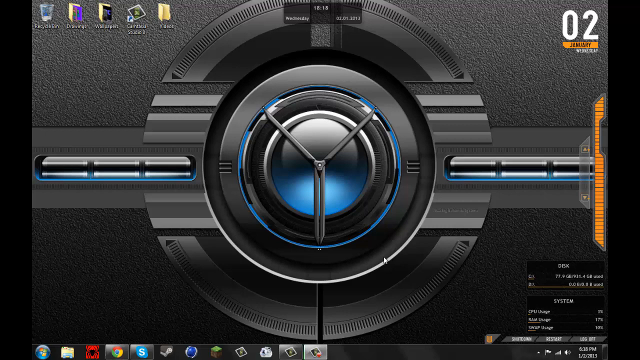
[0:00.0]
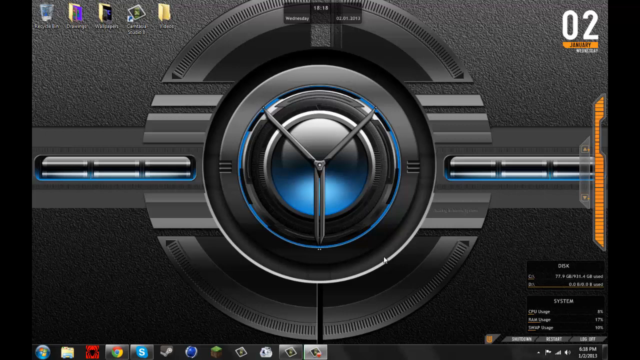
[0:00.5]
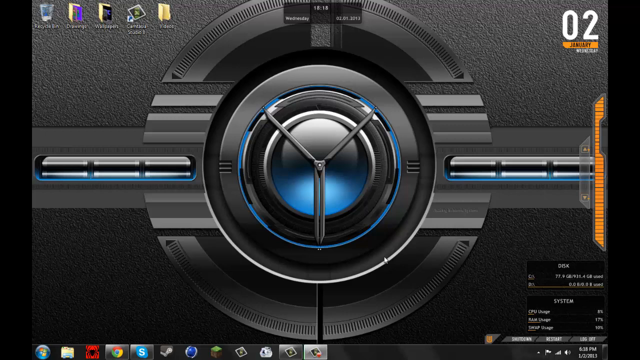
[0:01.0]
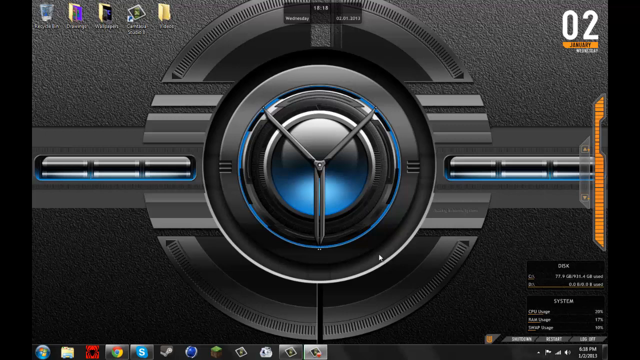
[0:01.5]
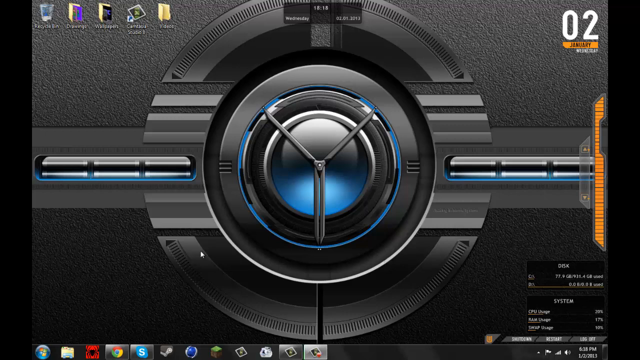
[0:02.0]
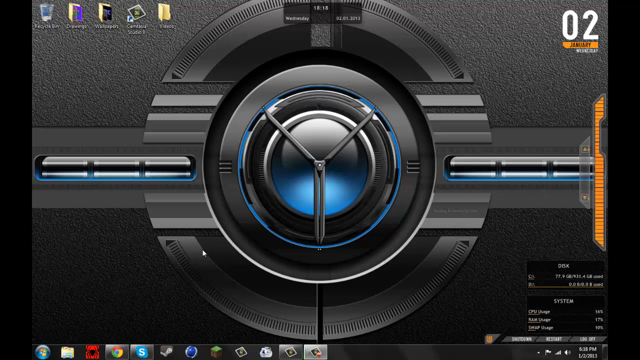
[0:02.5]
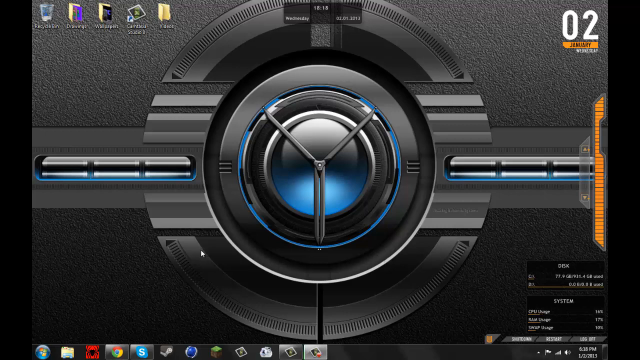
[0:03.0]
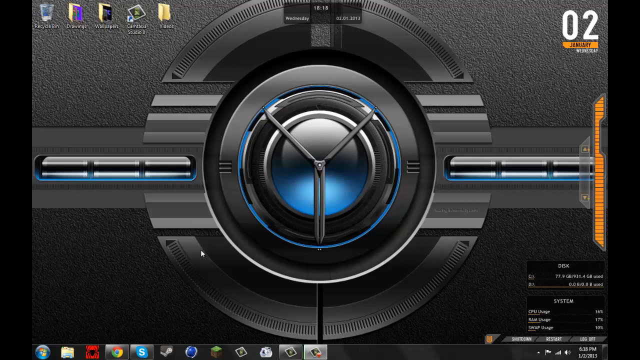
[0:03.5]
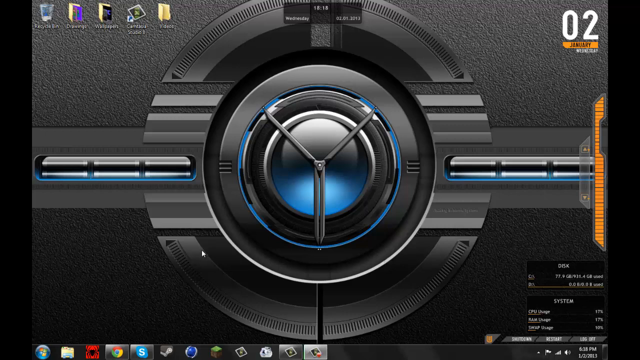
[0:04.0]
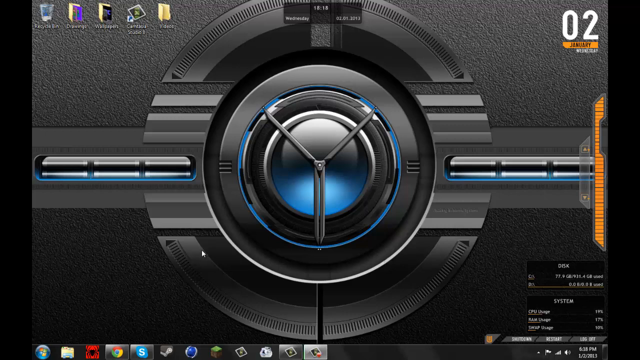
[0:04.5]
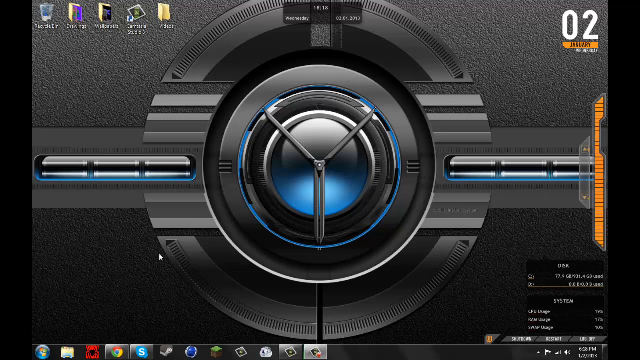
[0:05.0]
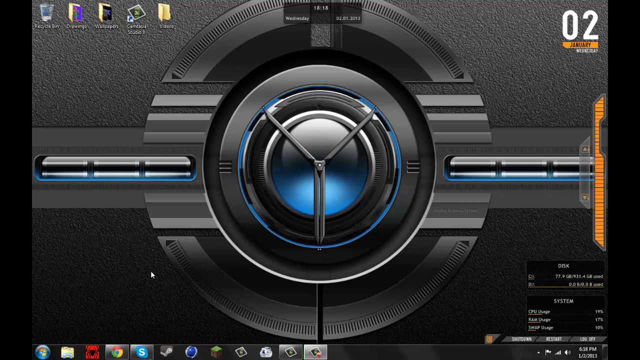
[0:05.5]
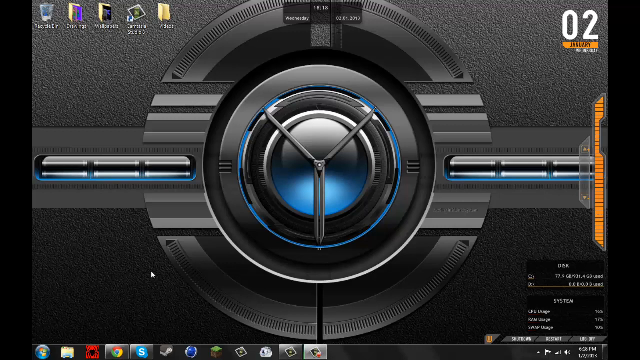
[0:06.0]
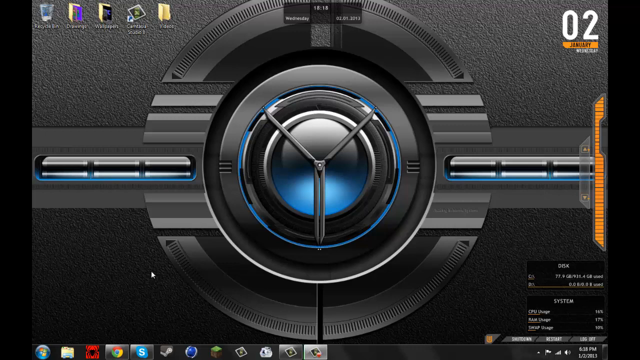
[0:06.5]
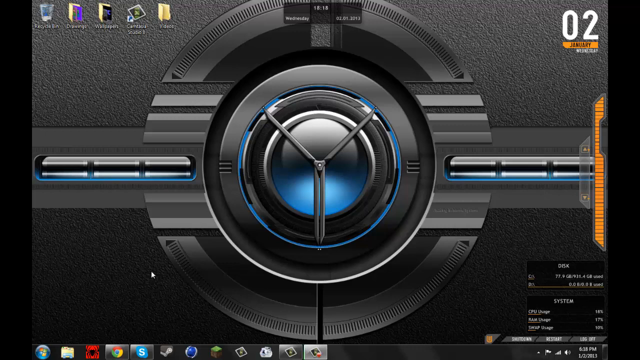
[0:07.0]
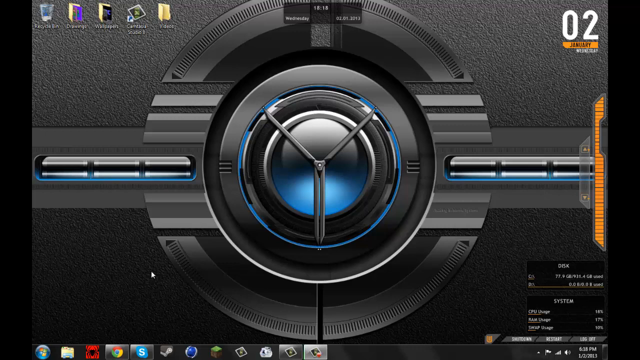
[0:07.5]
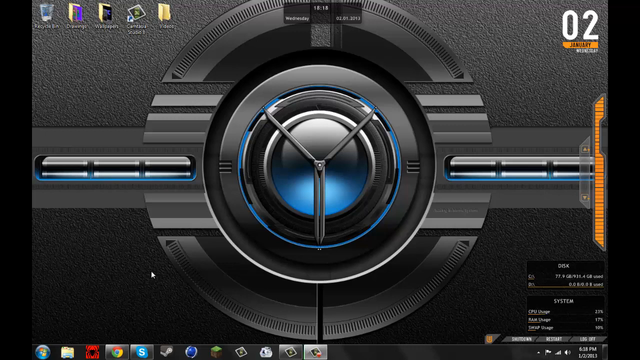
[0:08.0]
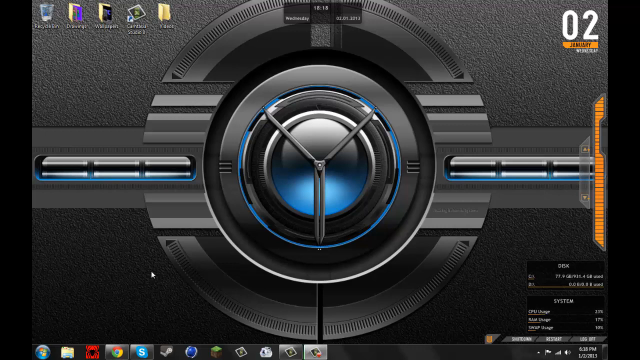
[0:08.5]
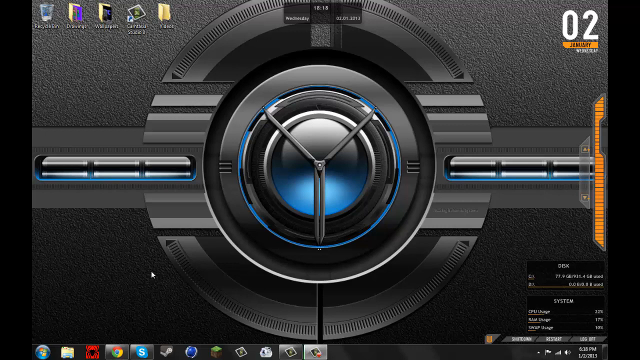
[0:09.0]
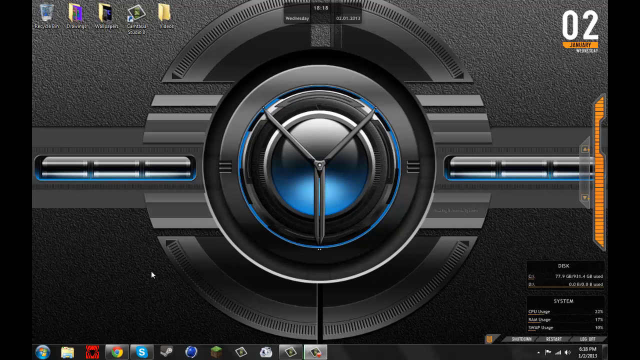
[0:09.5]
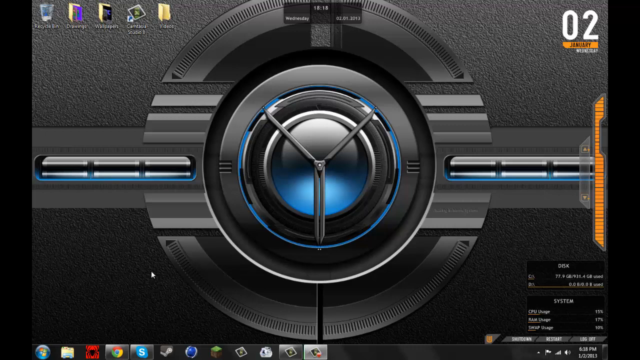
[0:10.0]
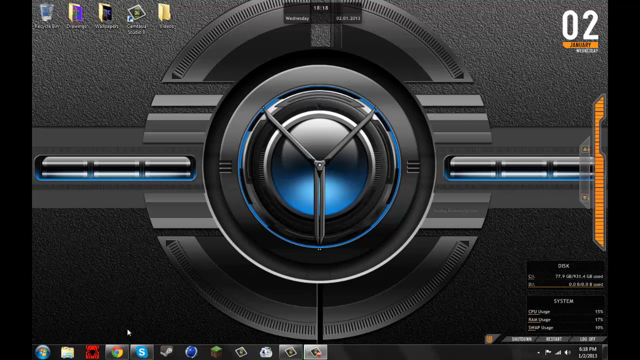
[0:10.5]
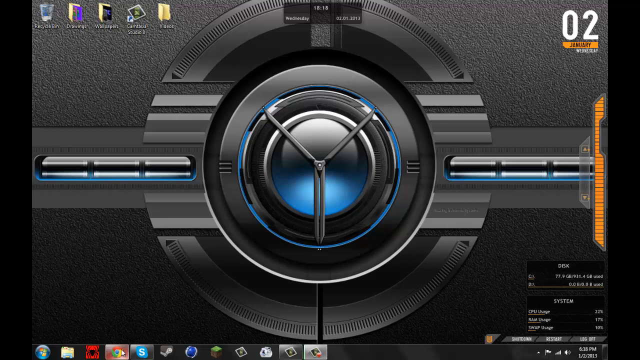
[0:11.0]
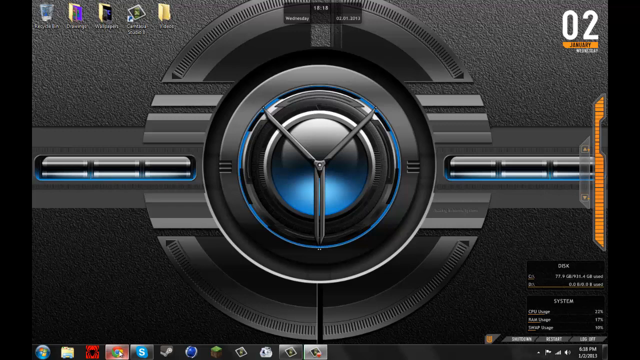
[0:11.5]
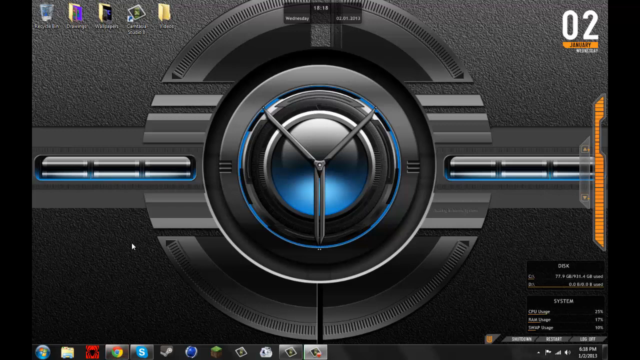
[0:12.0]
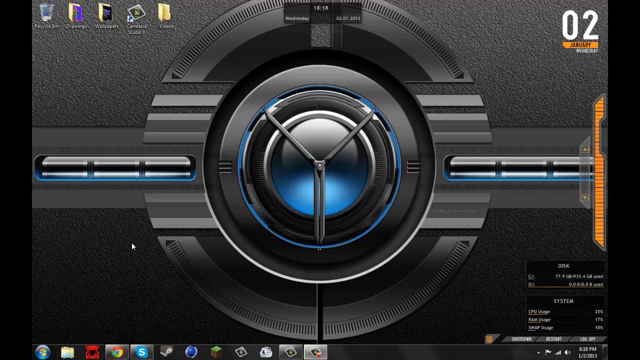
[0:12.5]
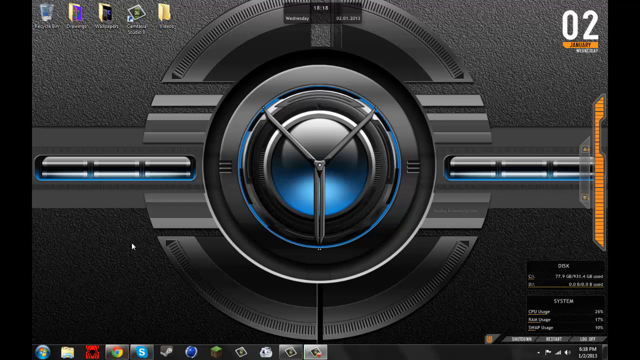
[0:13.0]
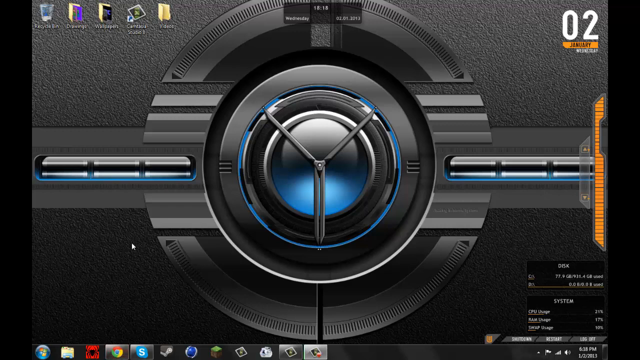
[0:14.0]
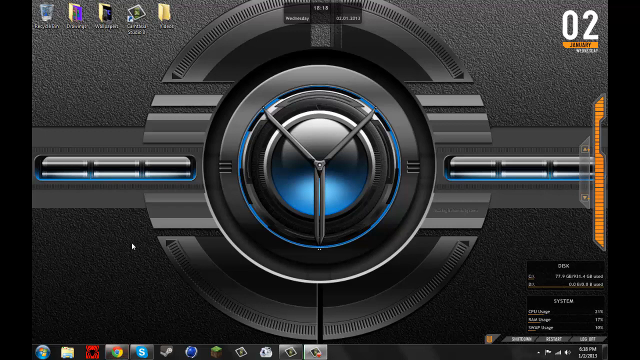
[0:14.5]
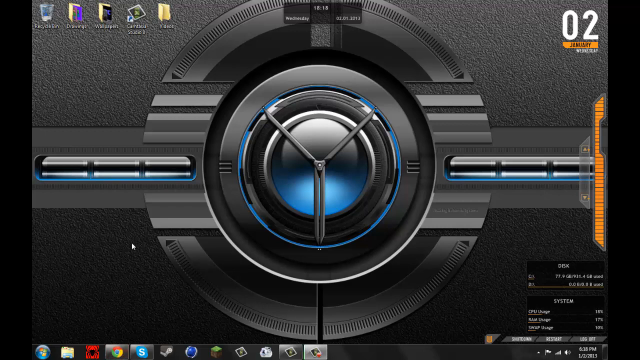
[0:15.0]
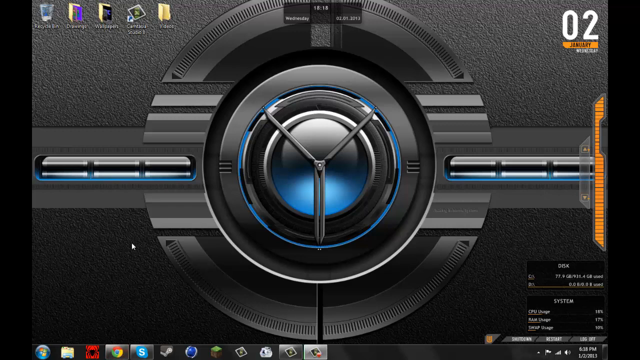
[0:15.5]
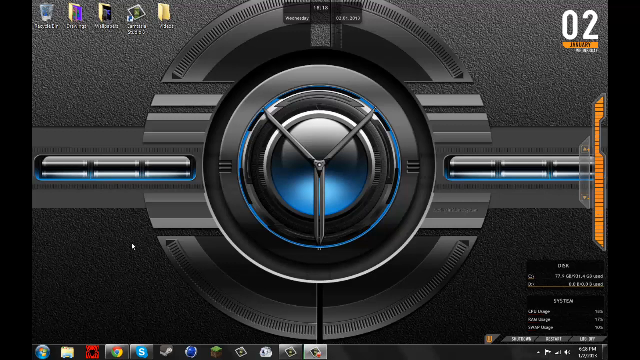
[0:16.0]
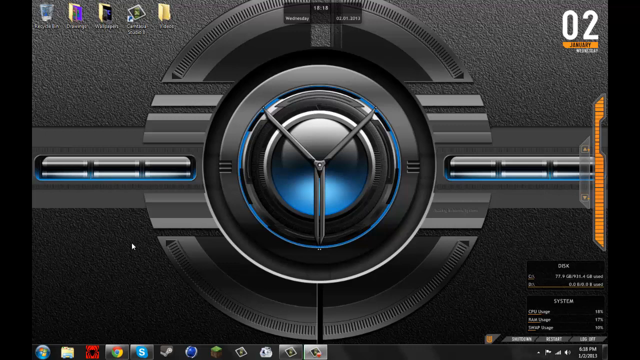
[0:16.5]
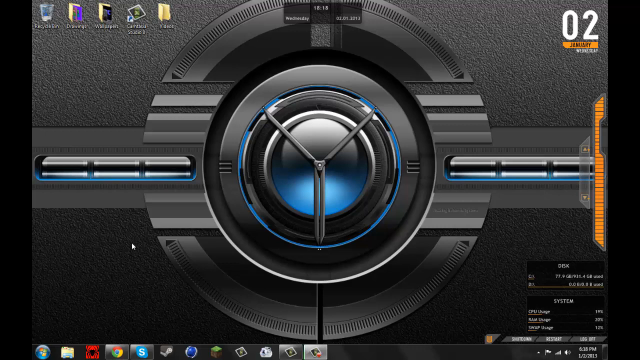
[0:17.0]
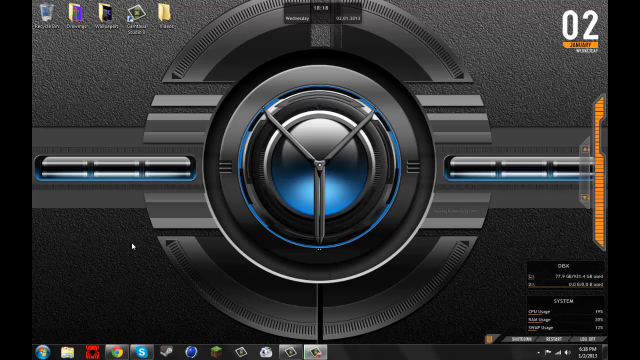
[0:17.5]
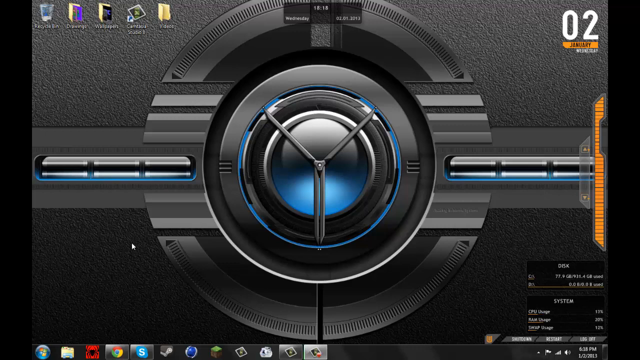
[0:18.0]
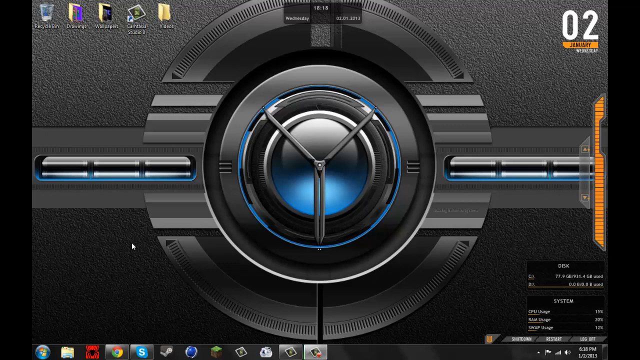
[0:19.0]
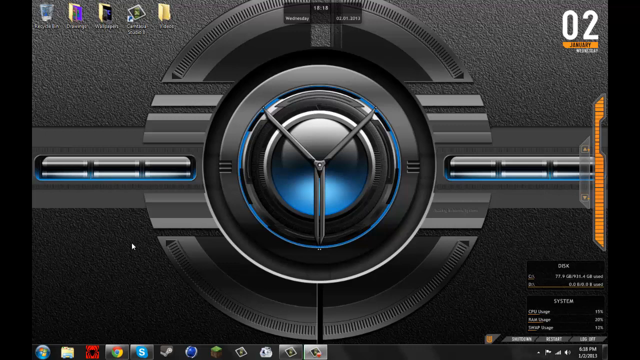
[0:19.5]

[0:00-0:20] Someone is on a computer that appears to be running Windows, possibly Windows Vista. The desktop is shown and the mouse moves around; nothing has been clicked or opened yet. The cursor seems to hover over Google Chrome without clicking it. Several icons are on the desktop: a couple of folders at the top of the screen, and toward the bottom Google Chrome and Skype, which is open. The background looks like a vault, mostly black with some blue highlights, and there is a circle that looks somewhat like the BMW logo. The date on the computer reads January 2nd; the year is unclear. The circle with the Windows logo suggests an older Windows version, apparently Windows Vista.